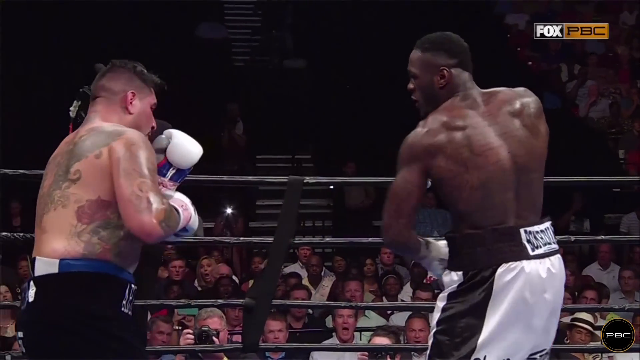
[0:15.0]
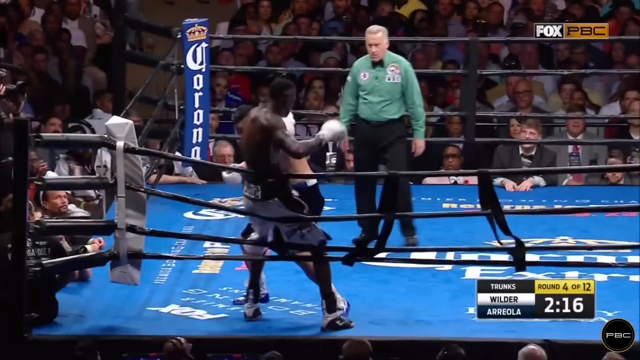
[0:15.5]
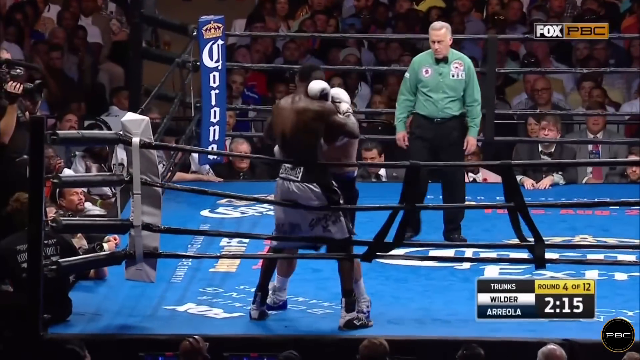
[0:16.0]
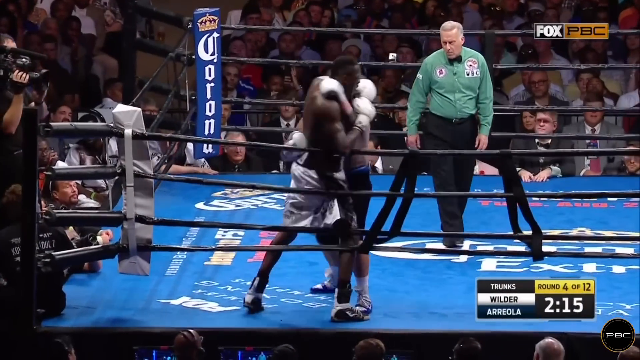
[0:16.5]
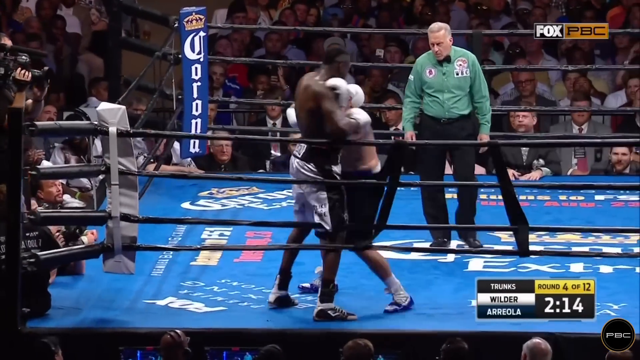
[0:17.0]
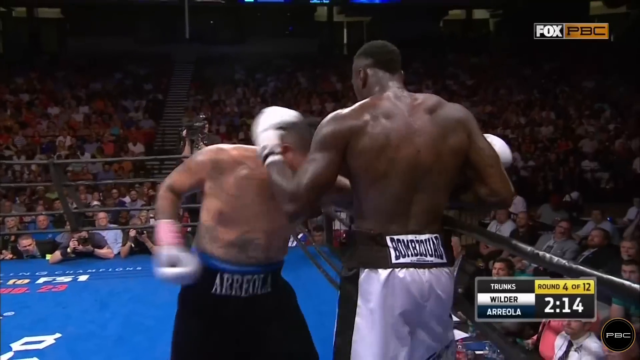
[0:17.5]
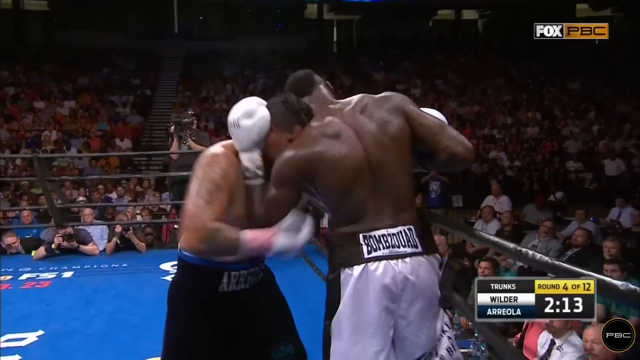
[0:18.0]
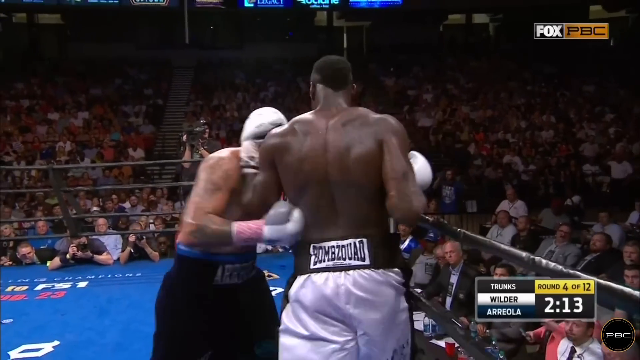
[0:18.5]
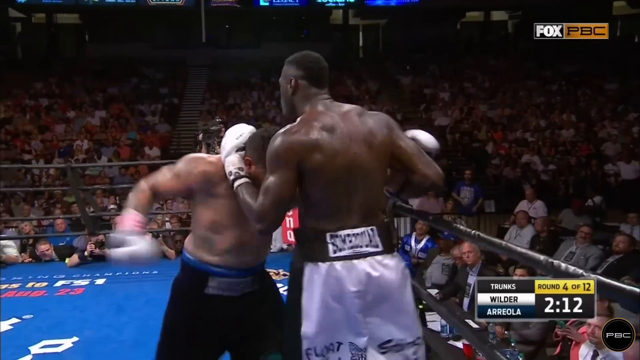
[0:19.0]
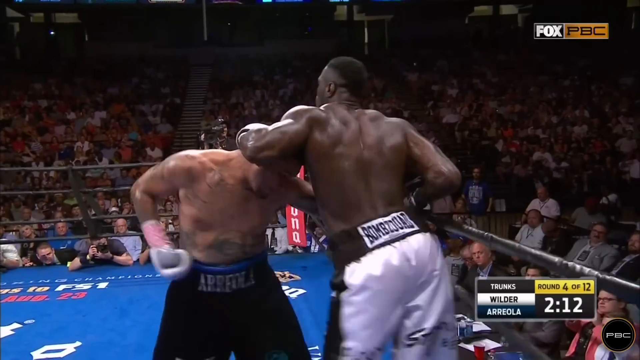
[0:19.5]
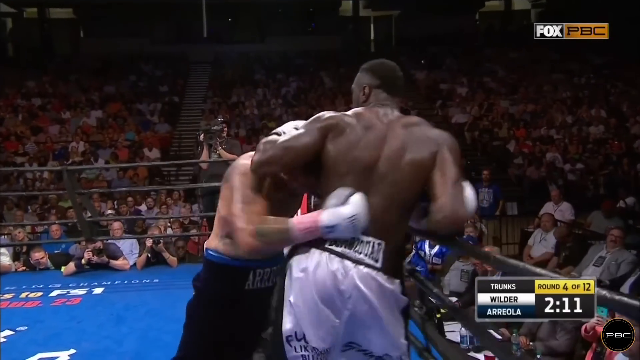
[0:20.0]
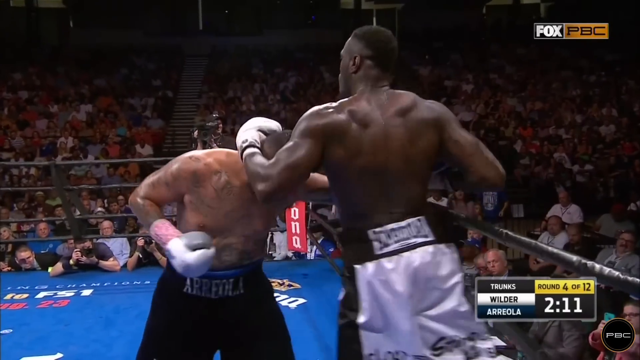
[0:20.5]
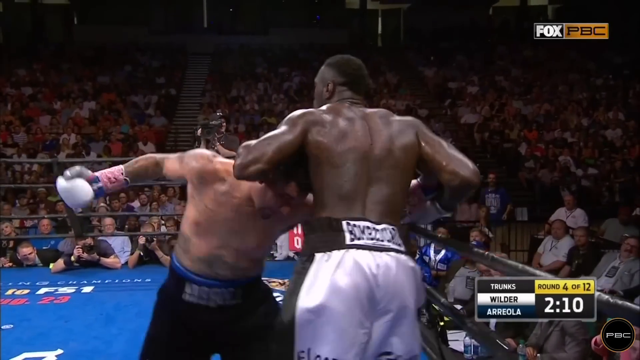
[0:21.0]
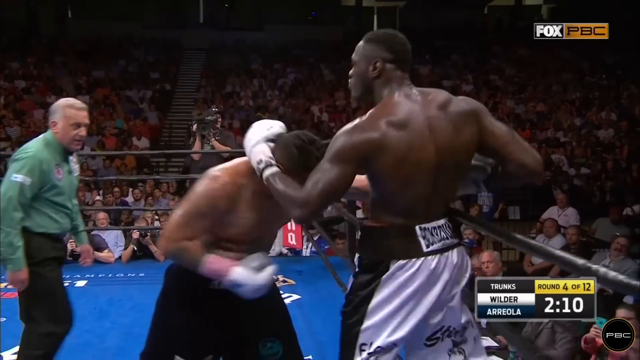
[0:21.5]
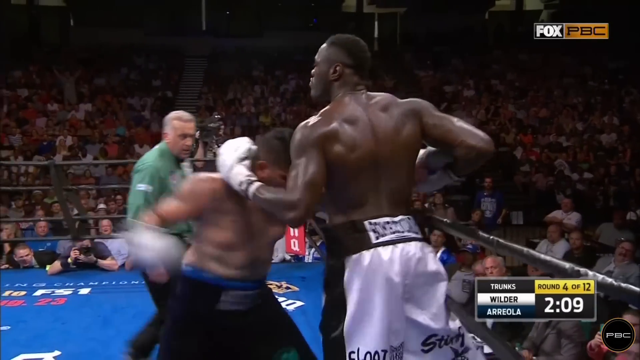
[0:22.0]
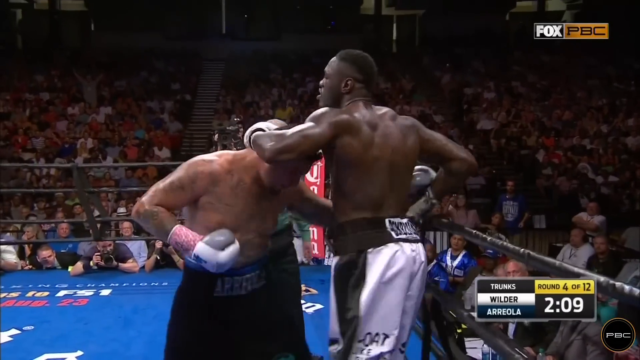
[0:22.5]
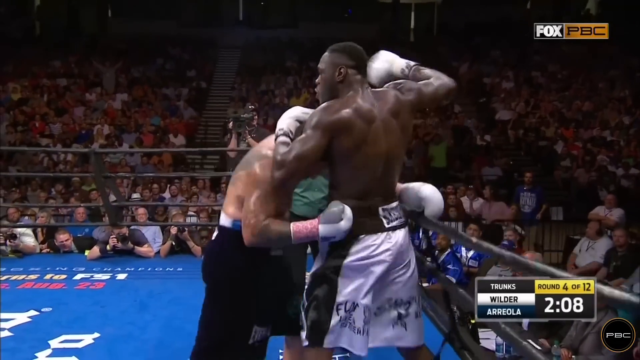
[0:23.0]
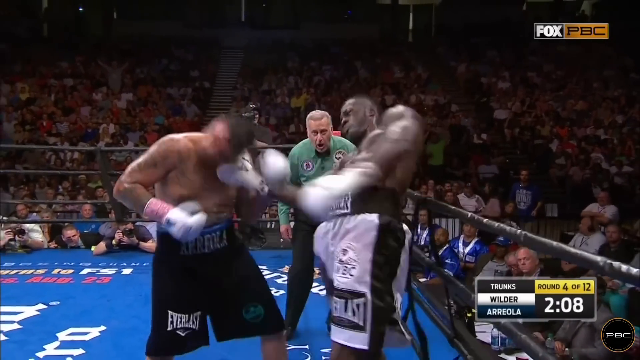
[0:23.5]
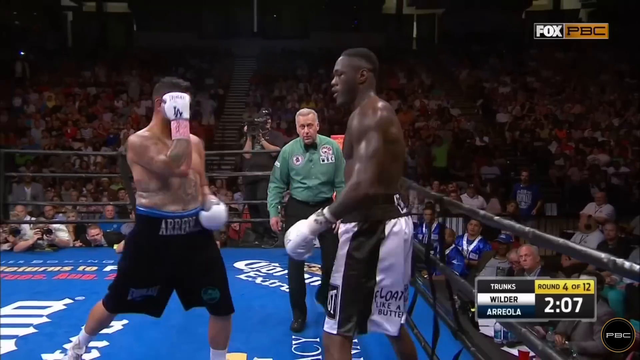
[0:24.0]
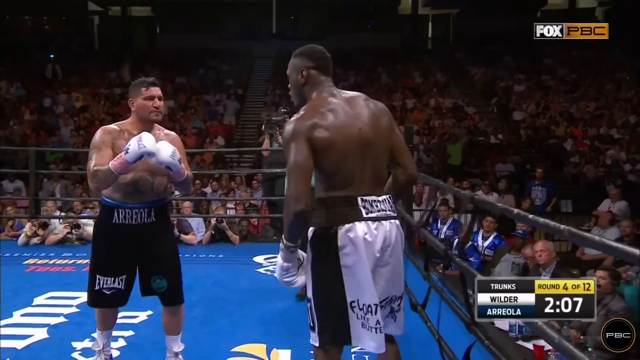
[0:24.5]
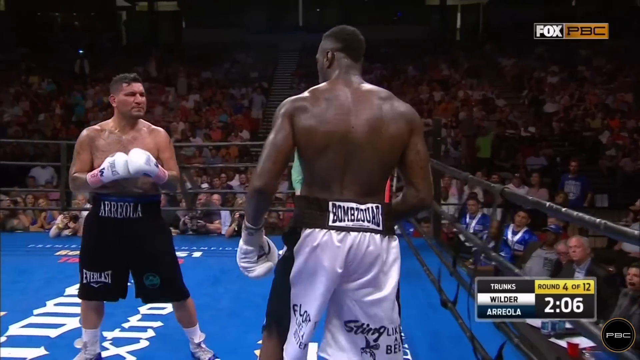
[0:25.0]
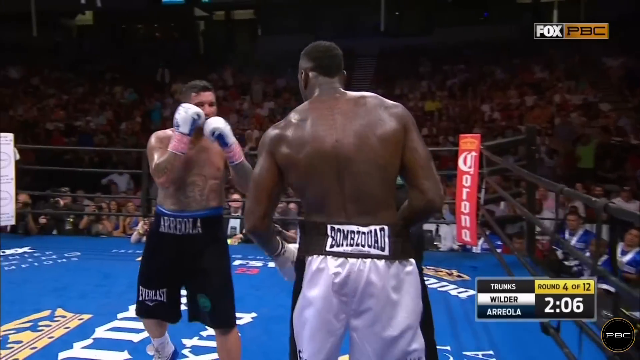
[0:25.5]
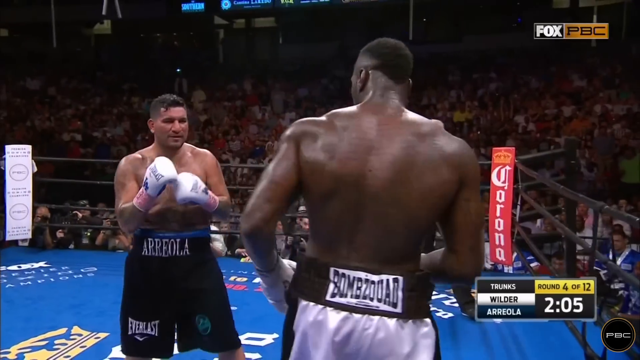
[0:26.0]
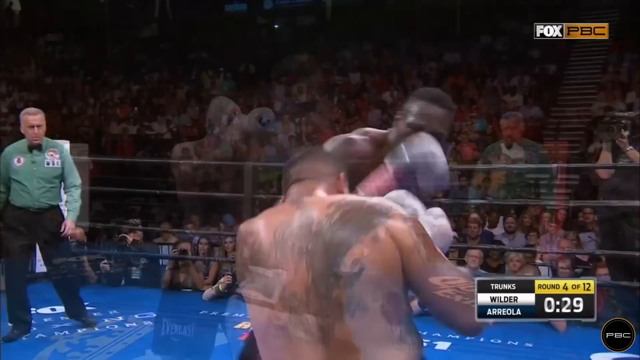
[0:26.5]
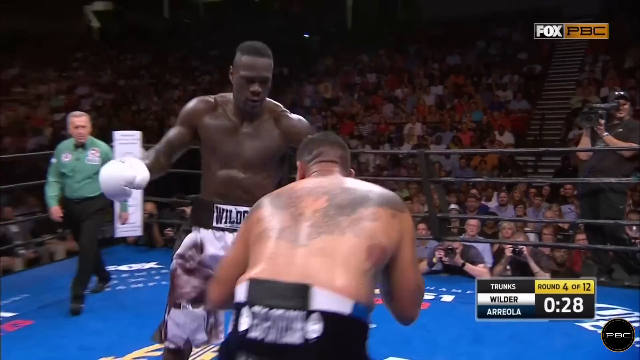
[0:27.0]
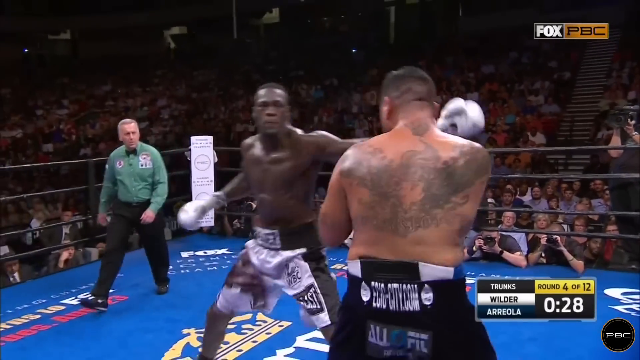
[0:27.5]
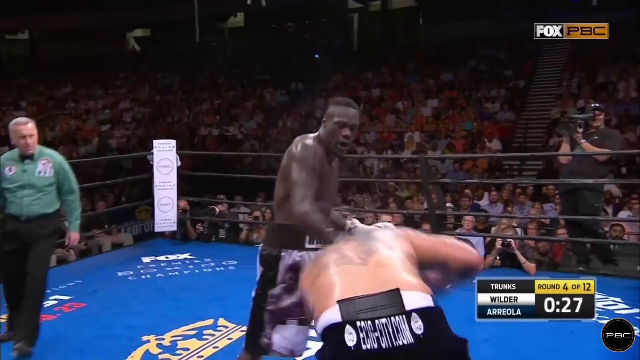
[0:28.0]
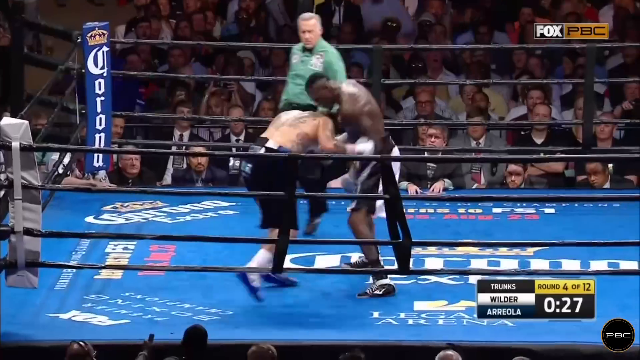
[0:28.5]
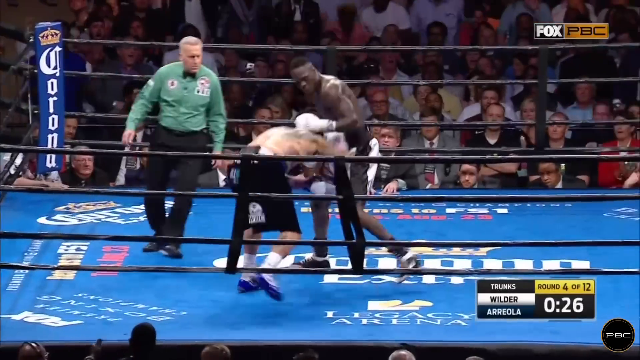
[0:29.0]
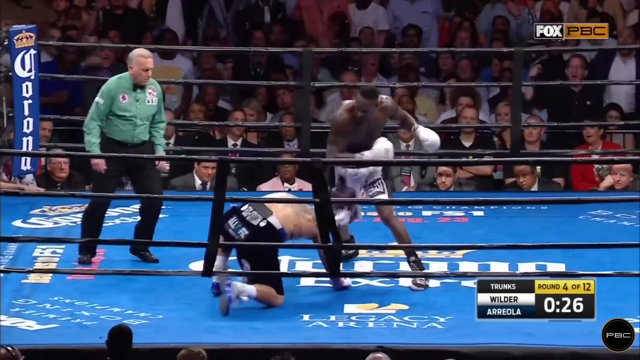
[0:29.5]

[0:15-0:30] The two boxers stand near a corner of the ring. The African boxer has the other boxer in a headlock; he is taking the punches and also wriggling his hips in a circular motion. Before letting go, he gives his opponent a right uppercut to the head. They move to the center of the ring, where the African boxer delivers a left and a right punch to the tattooed boxer, who kneels down on the floor of the ring. The audience around the ring cheers, and some of them get up from their seats.